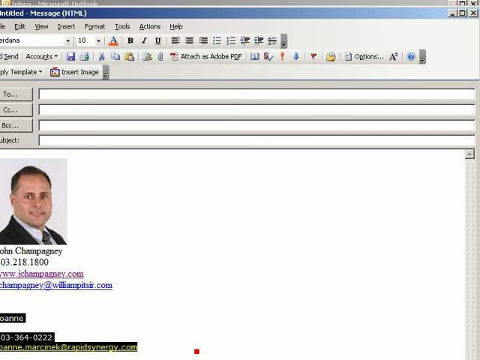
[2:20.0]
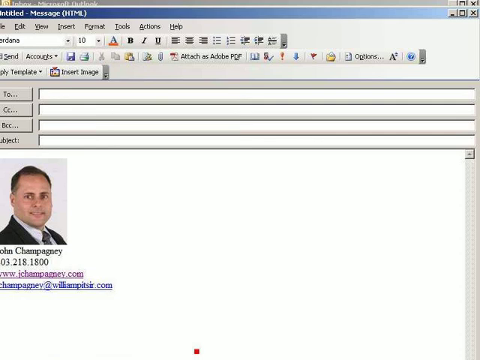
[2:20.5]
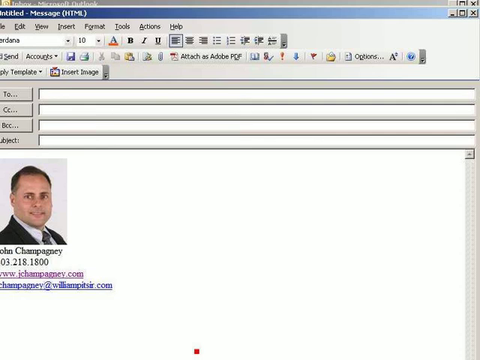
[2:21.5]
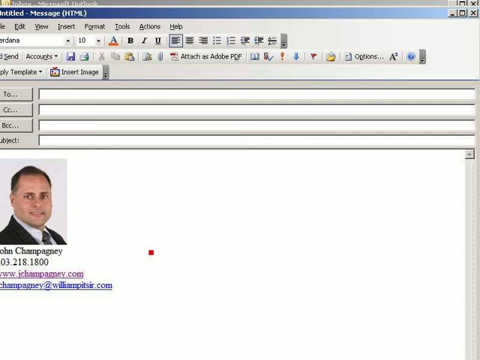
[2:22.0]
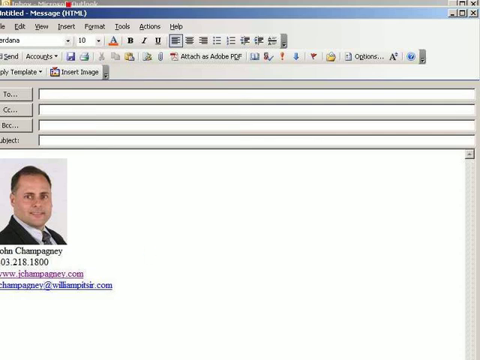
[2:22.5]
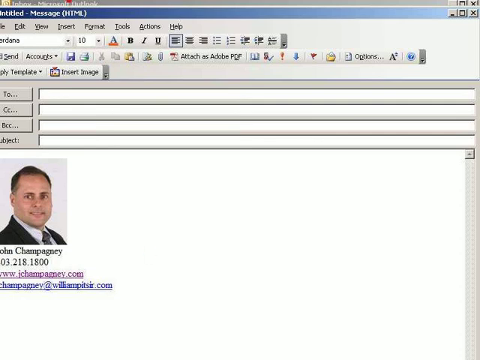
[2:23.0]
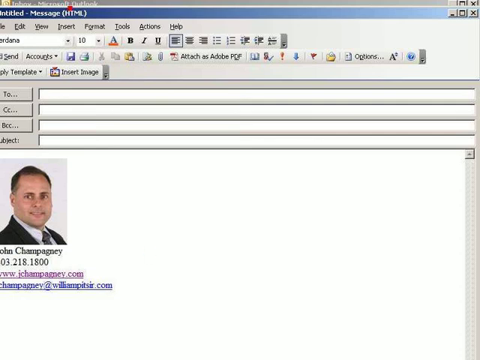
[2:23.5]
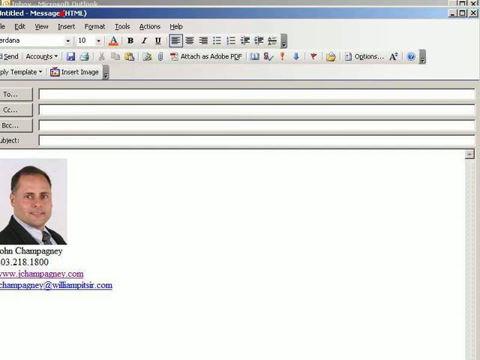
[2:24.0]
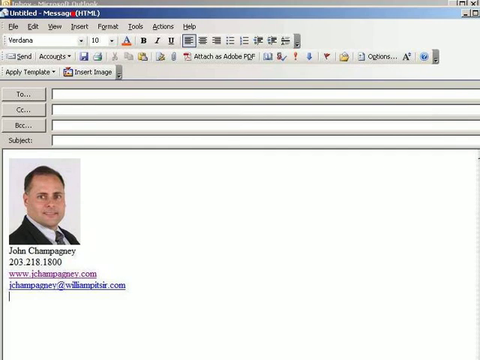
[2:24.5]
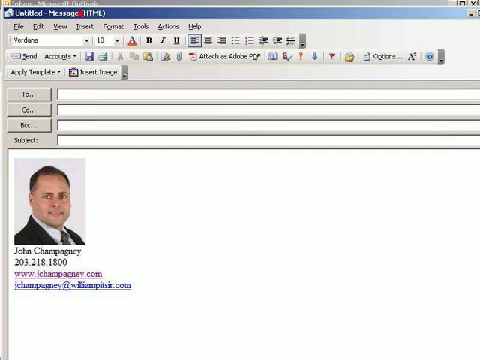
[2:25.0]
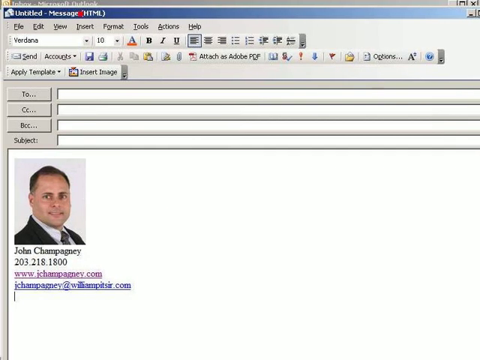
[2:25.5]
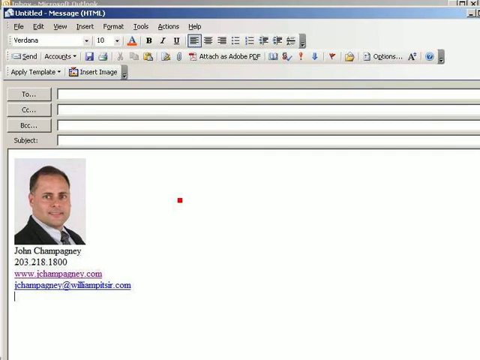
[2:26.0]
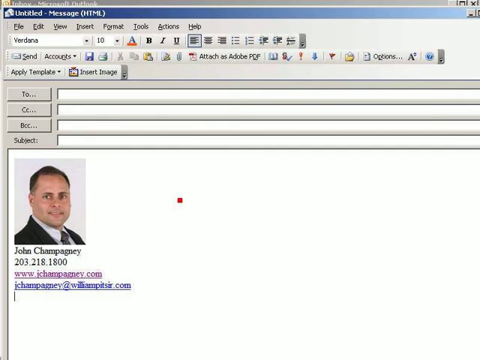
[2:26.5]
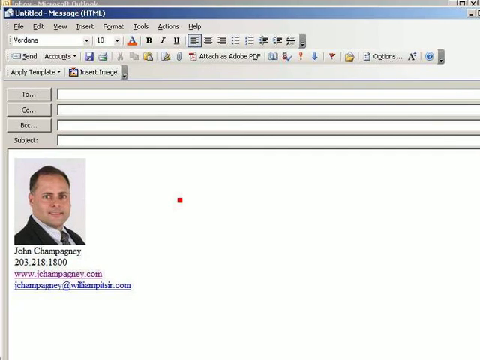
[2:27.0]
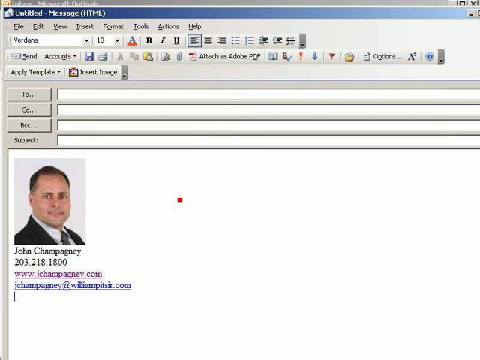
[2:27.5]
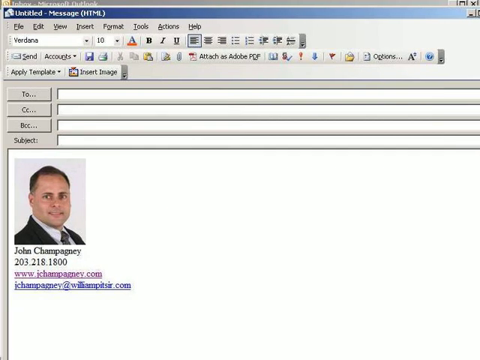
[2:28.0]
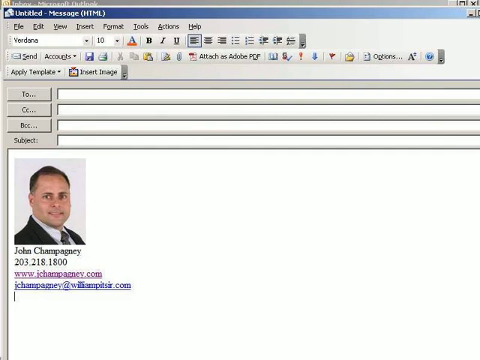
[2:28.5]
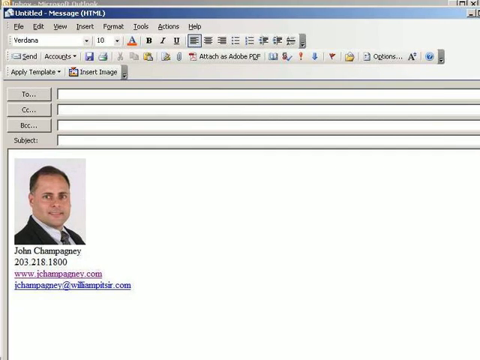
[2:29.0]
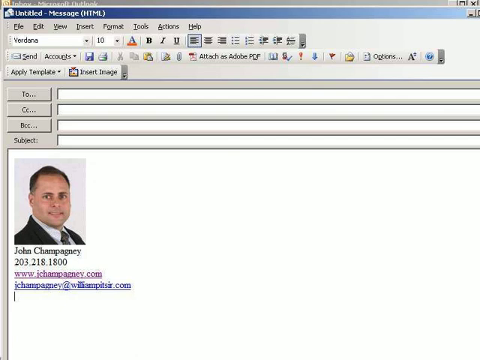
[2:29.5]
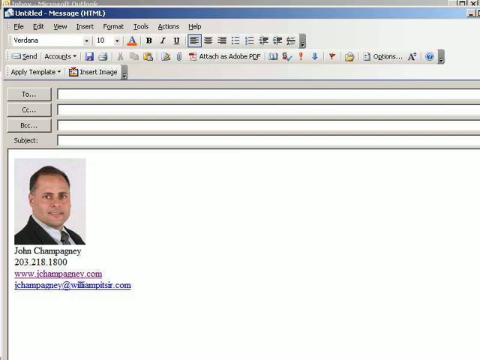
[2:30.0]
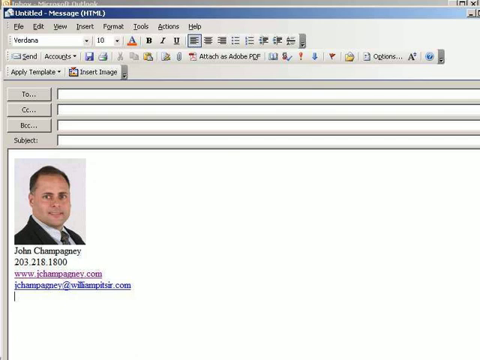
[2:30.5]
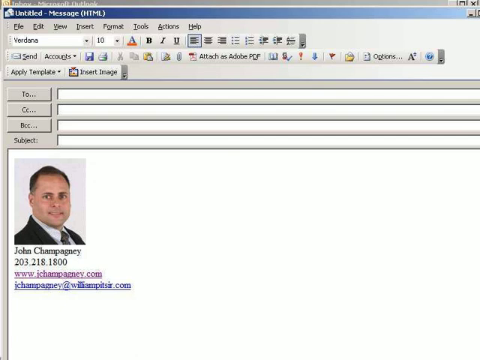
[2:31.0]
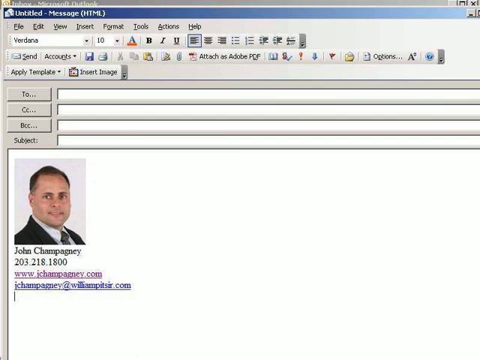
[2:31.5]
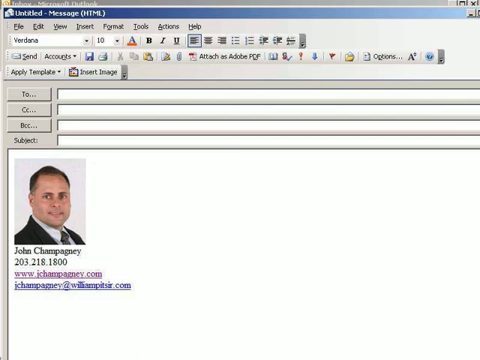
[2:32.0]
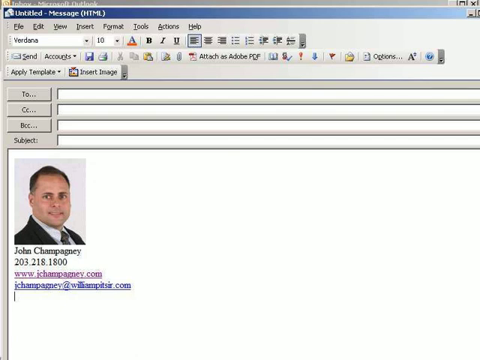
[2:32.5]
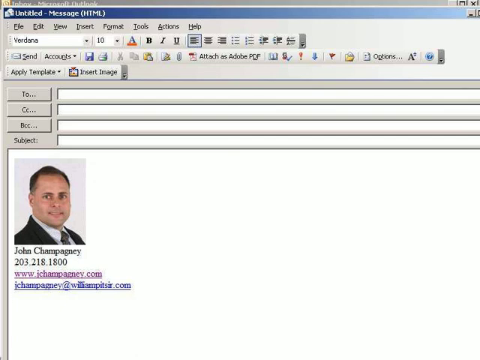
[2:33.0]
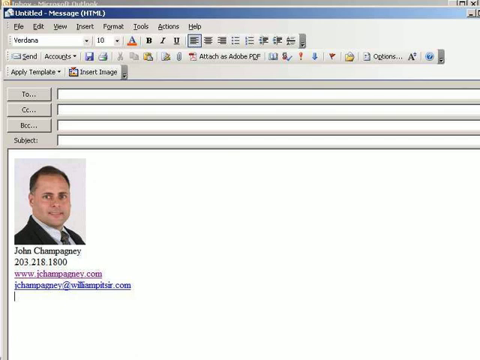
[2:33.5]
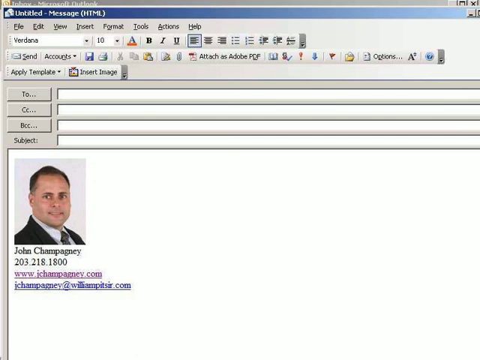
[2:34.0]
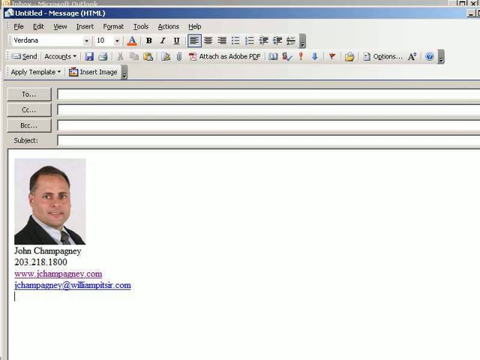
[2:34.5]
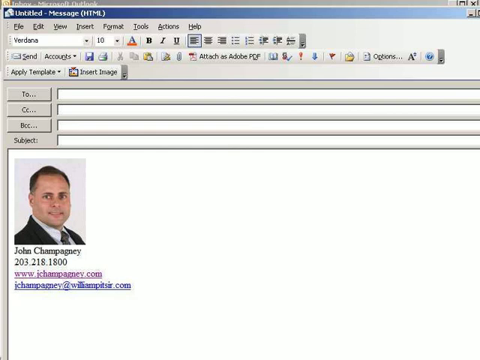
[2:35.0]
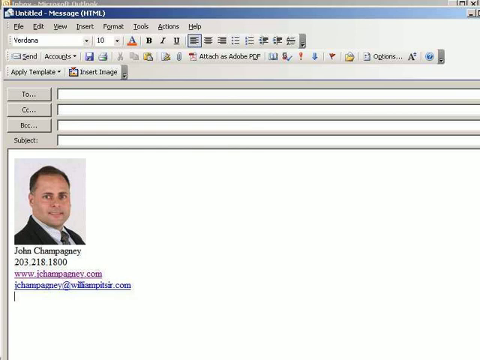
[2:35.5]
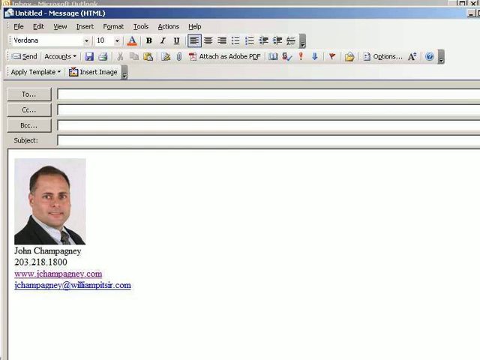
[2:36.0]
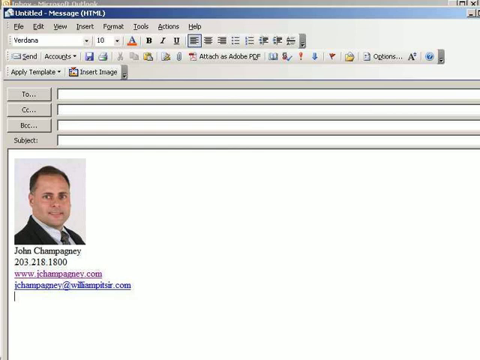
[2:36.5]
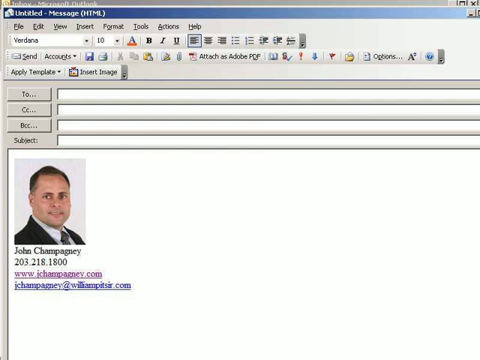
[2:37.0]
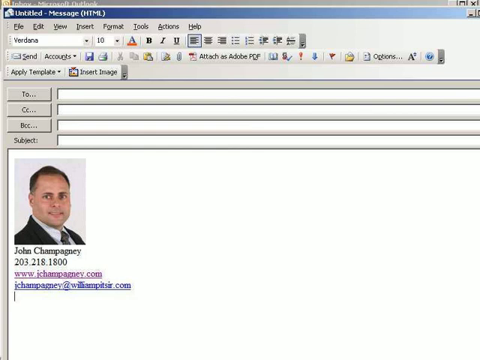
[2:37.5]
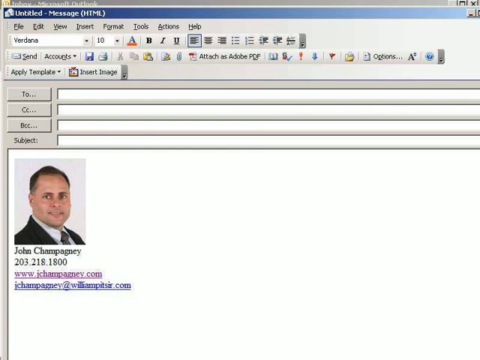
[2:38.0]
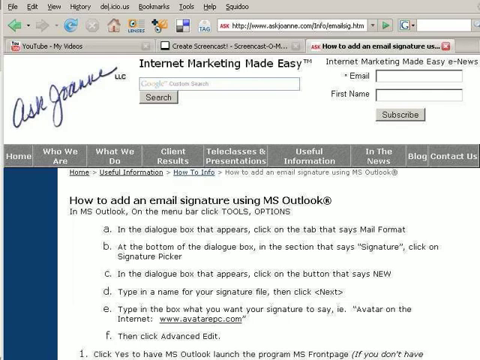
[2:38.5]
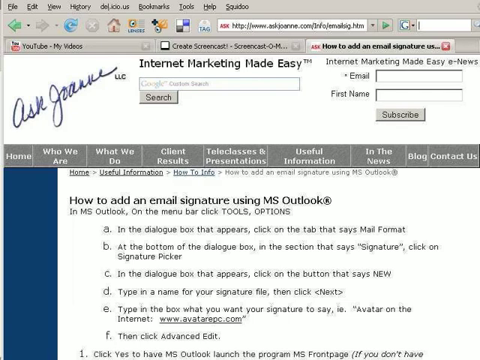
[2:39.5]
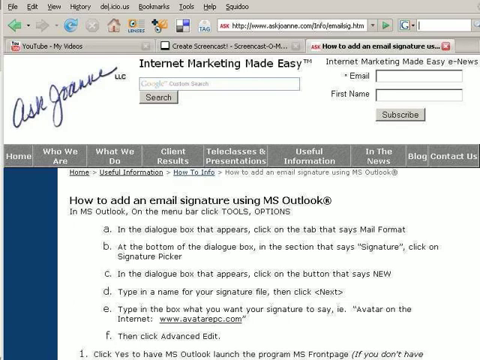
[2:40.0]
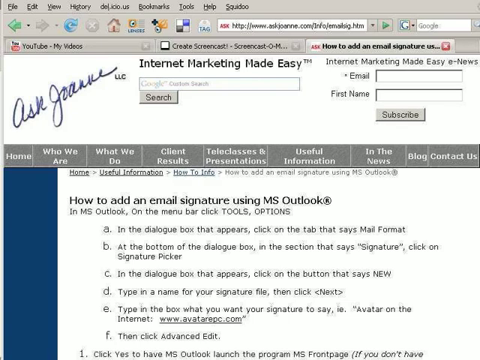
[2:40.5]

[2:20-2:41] A new untitled message with the new signature for John Champagney is on the screen, and nothing happens for a while. The user then appears to go back to the original Ask Joanne Internet Marketing Made Easy page that shows how to add an email signature using MS Outlook.